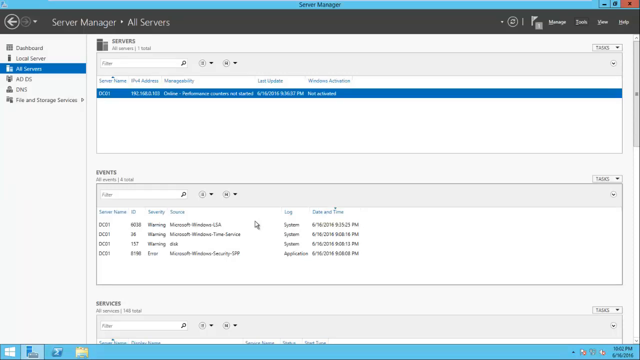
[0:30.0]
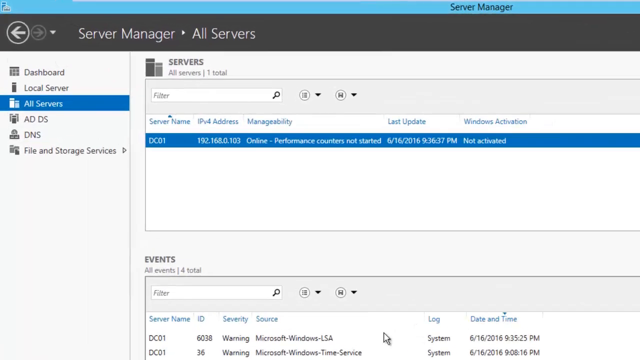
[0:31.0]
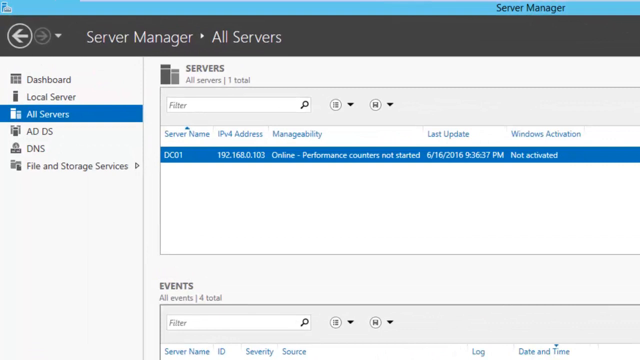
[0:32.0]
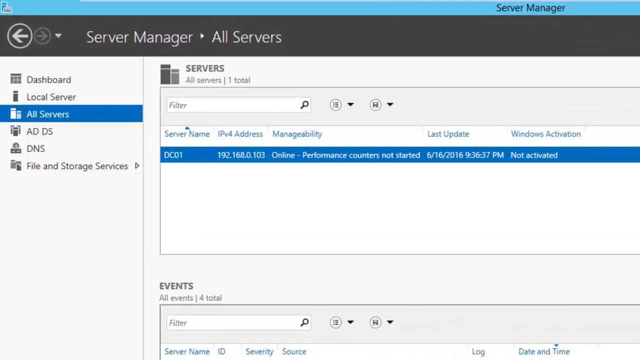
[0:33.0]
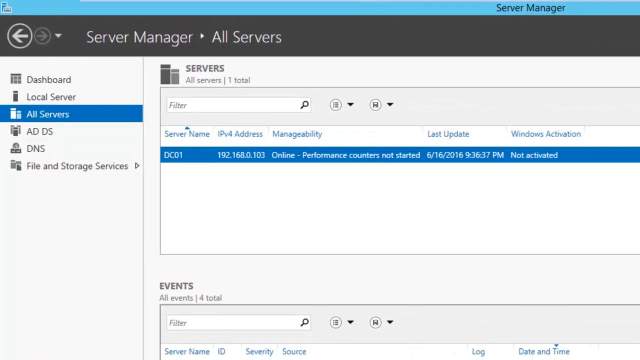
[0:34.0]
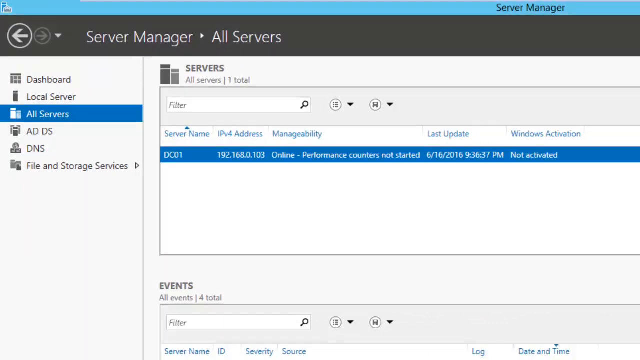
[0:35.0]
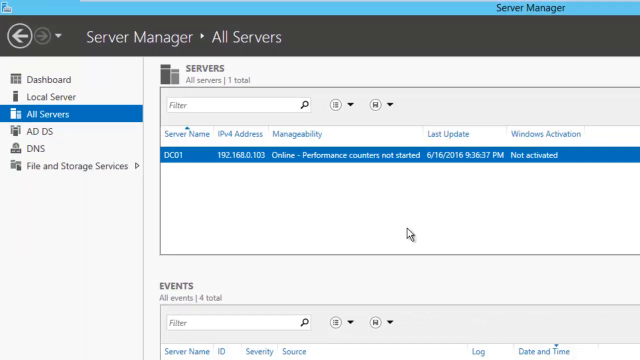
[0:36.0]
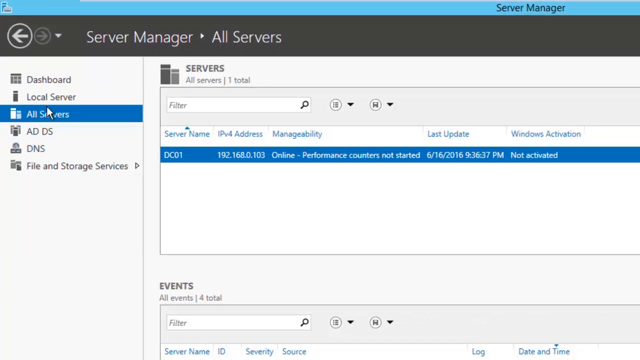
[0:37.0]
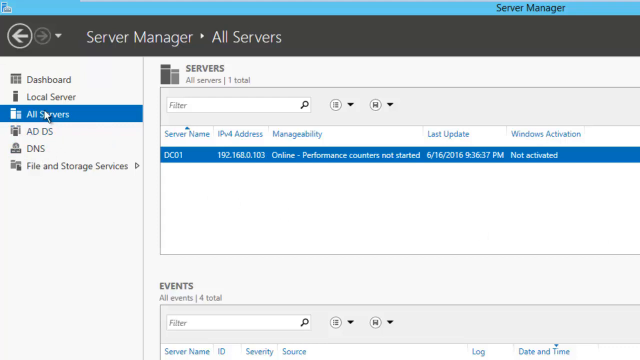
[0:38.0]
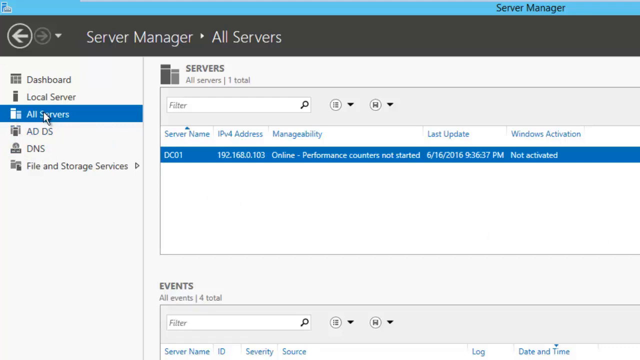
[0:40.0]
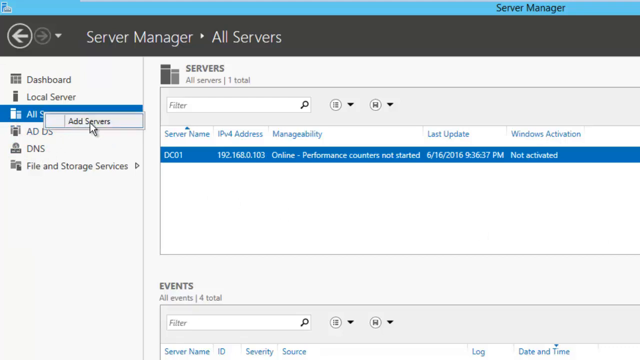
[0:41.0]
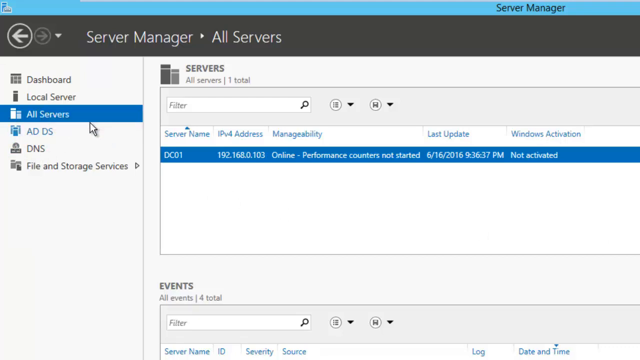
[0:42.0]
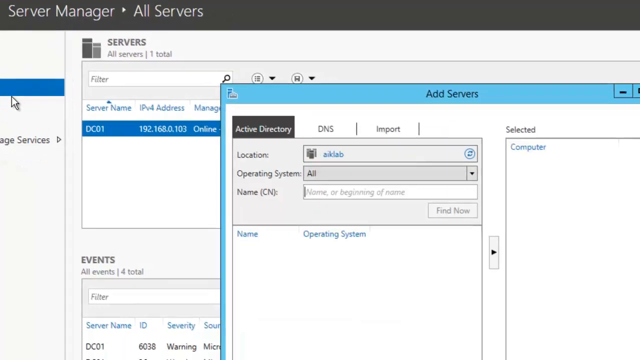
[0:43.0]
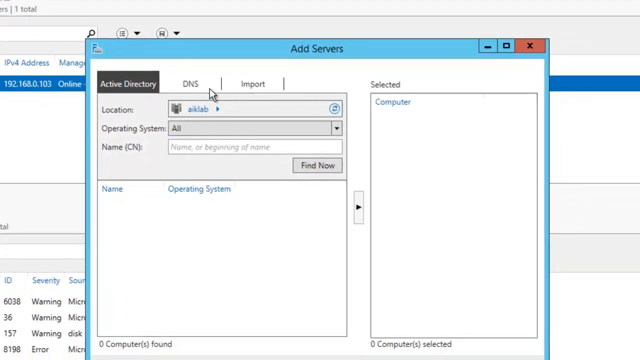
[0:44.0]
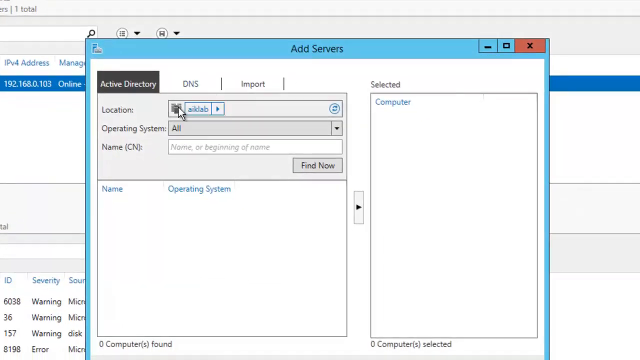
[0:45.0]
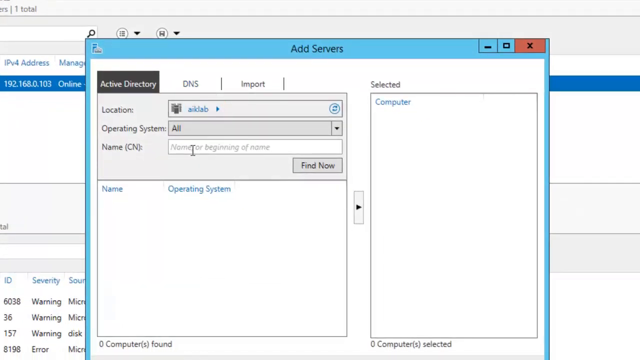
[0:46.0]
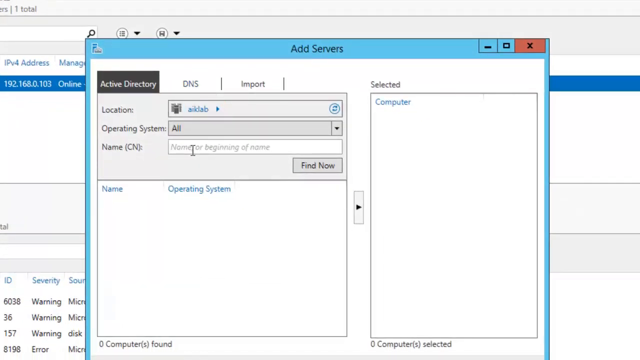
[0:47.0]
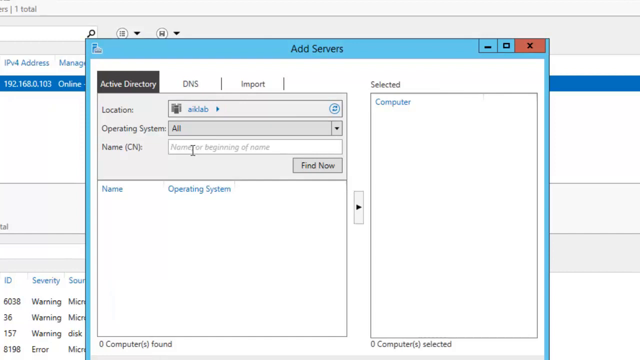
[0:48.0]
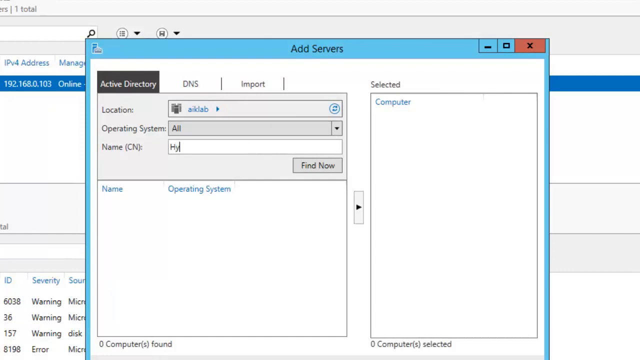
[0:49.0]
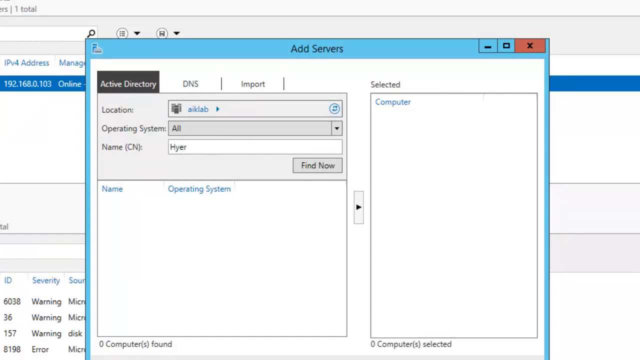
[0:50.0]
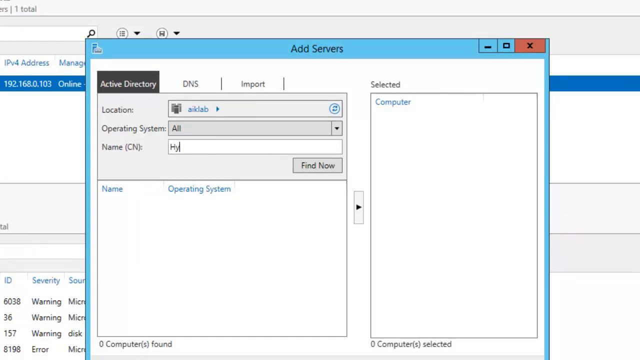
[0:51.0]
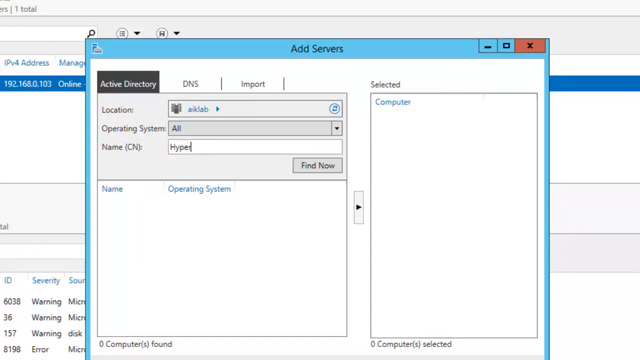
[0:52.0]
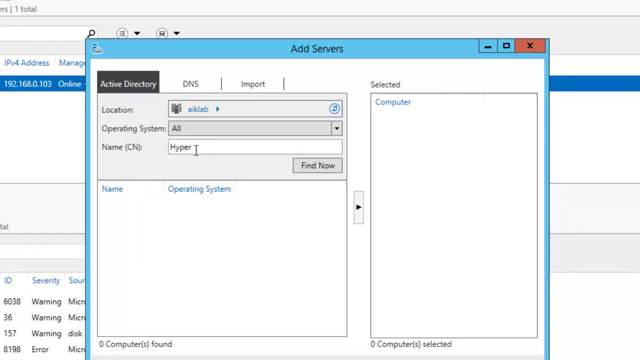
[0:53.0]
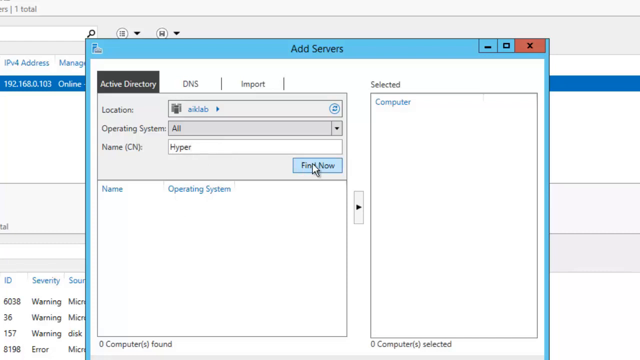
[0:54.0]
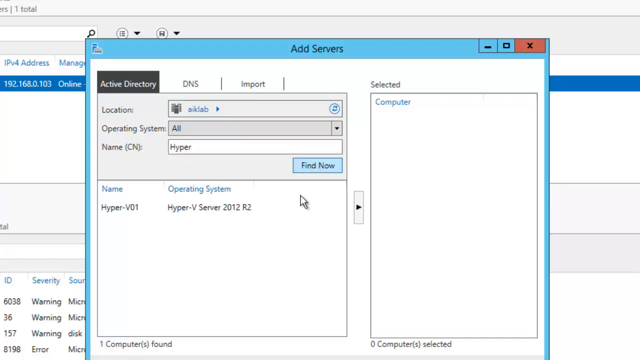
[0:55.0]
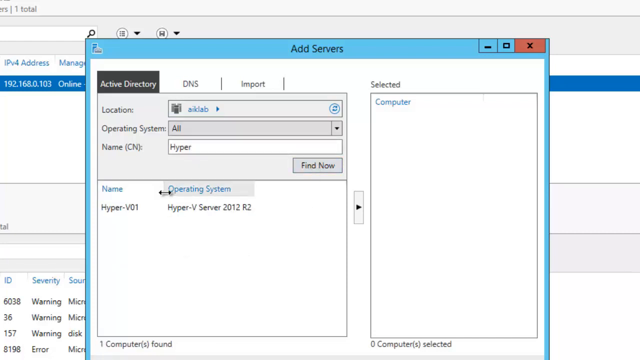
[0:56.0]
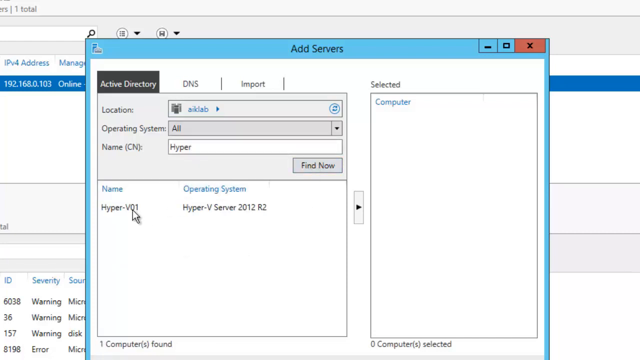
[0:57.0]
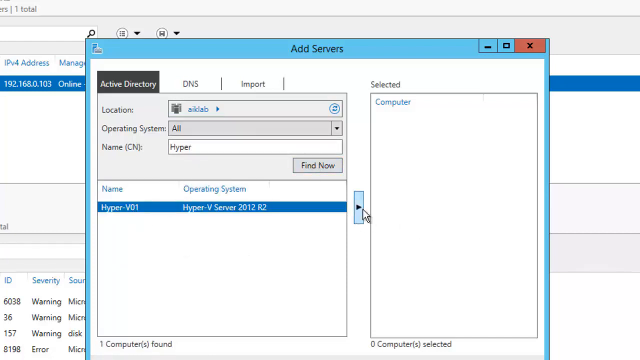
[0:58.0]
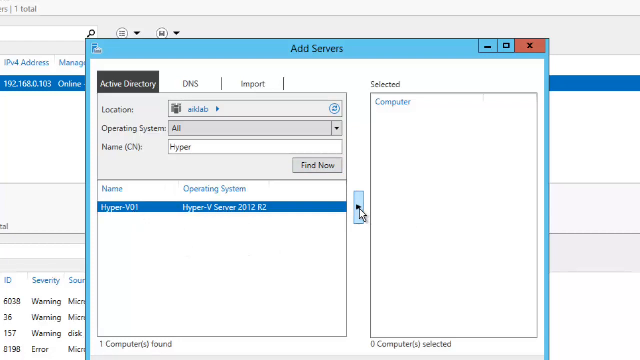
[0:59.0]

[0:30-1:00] In the top left corner of the server manager page is a menu of links. The left column reads, from top to bottom, dashboard, local server, all server, ADDS, DNS, and file and storage services, with all servers highlighted. In the middle part of the page the title is "servers," and beneath it the DC01 line of text is highlighted in blue. There are column options at the top, and under the windows activation column it says "not activated." The user double-clicks the option, an add servers dialog box comes up, and they enter the server name Hyper.